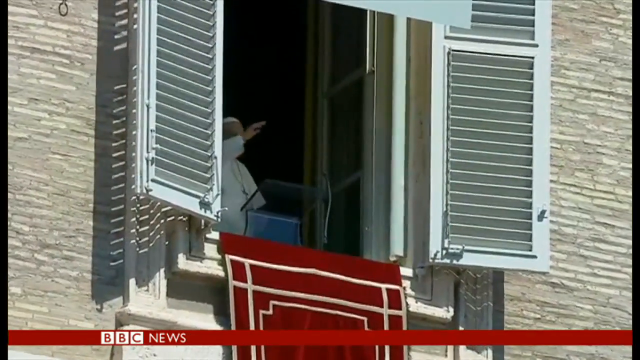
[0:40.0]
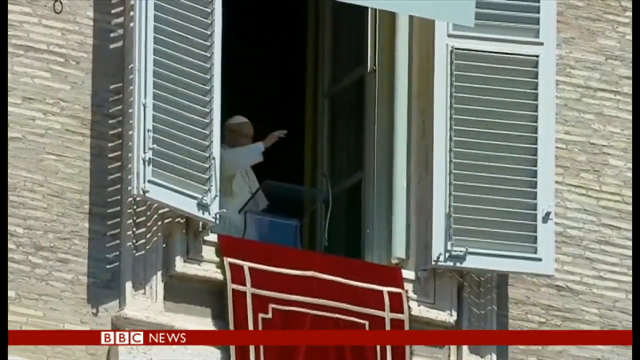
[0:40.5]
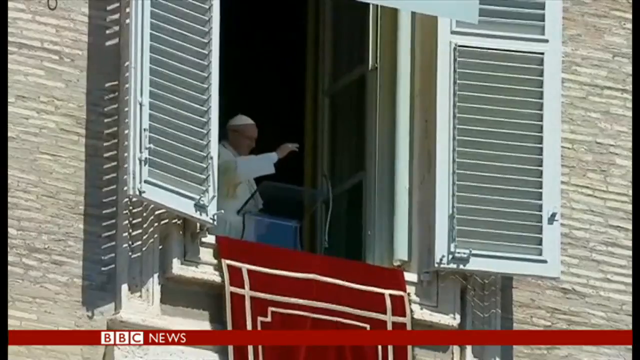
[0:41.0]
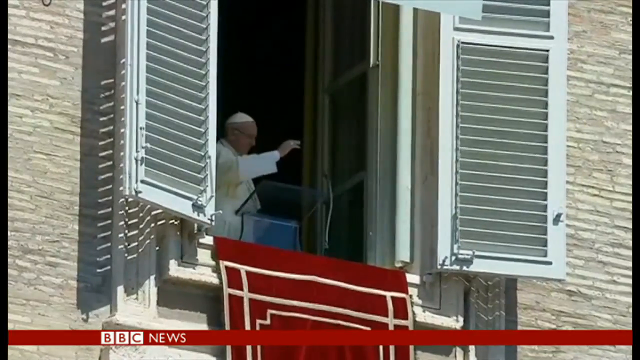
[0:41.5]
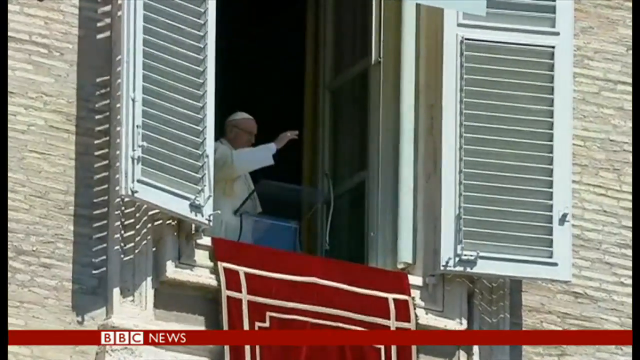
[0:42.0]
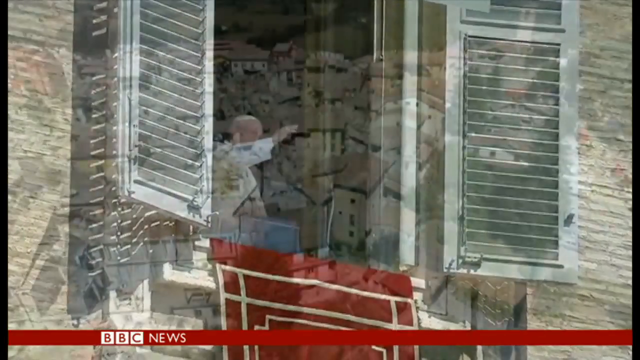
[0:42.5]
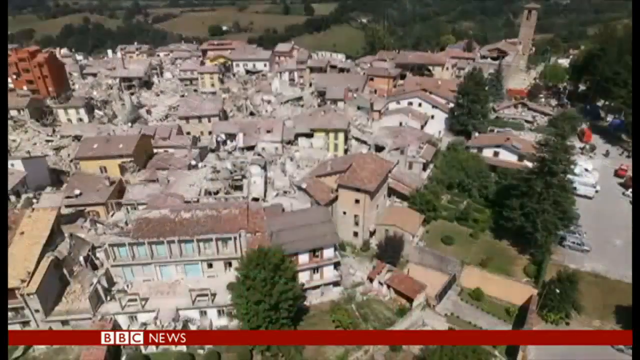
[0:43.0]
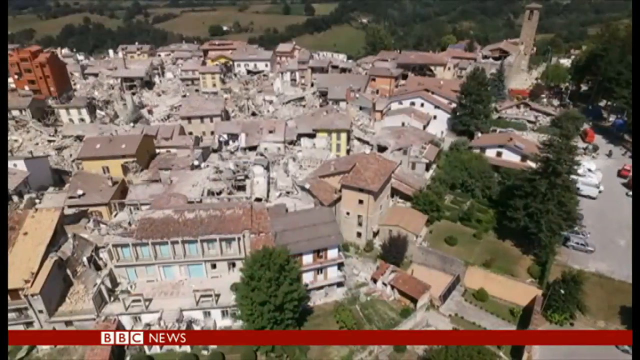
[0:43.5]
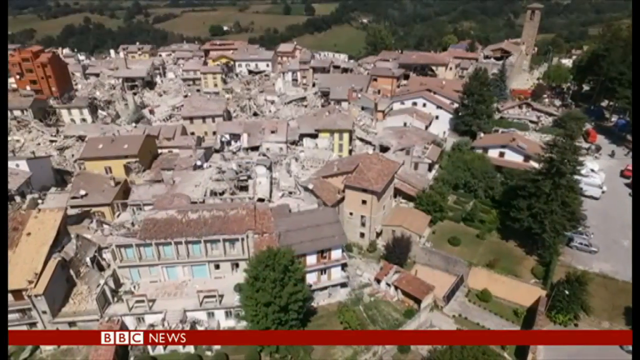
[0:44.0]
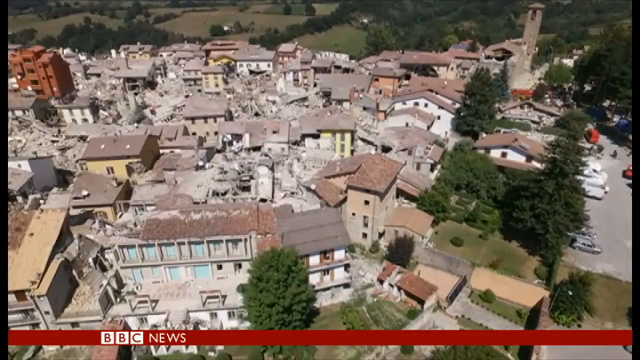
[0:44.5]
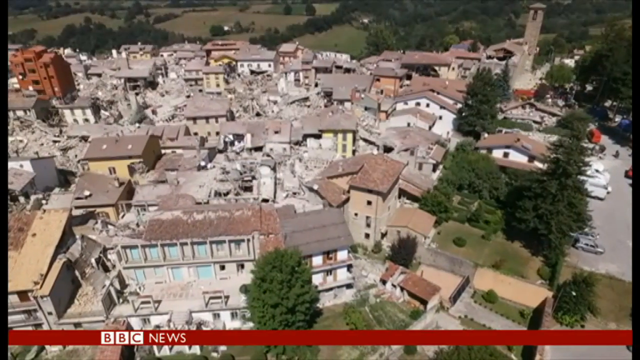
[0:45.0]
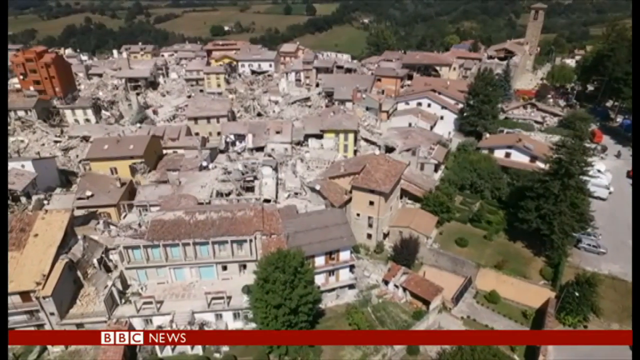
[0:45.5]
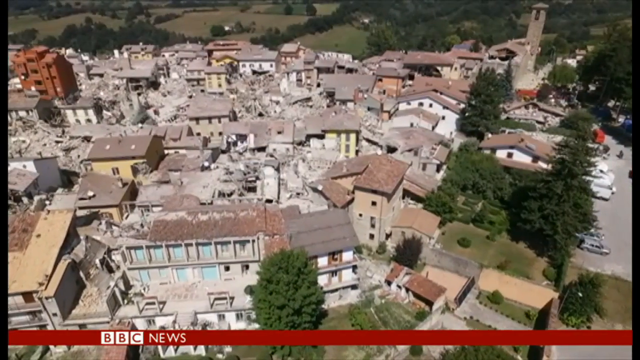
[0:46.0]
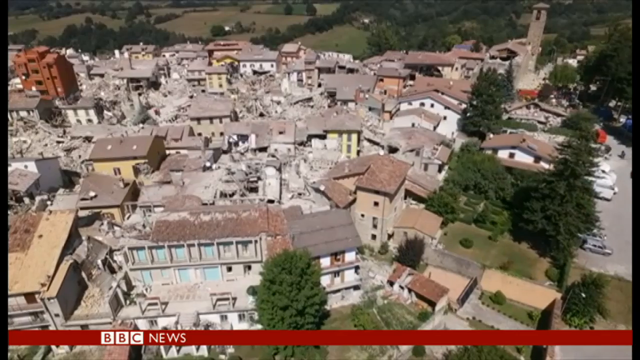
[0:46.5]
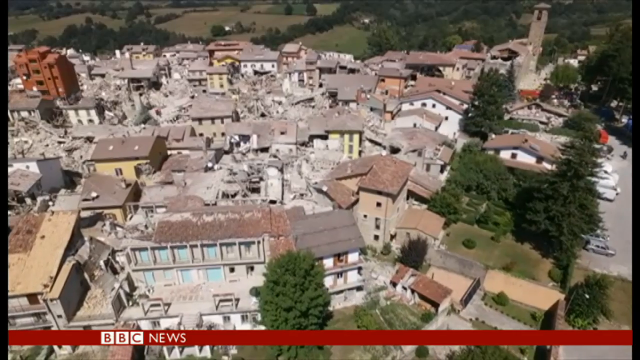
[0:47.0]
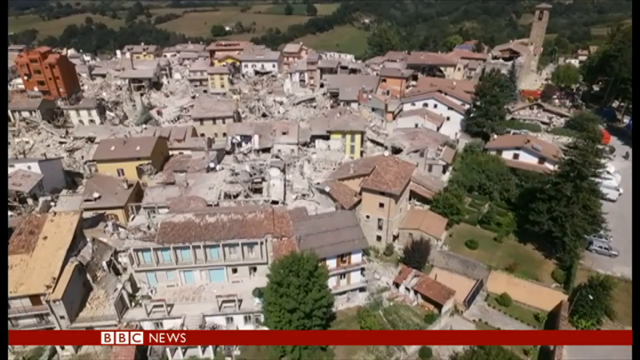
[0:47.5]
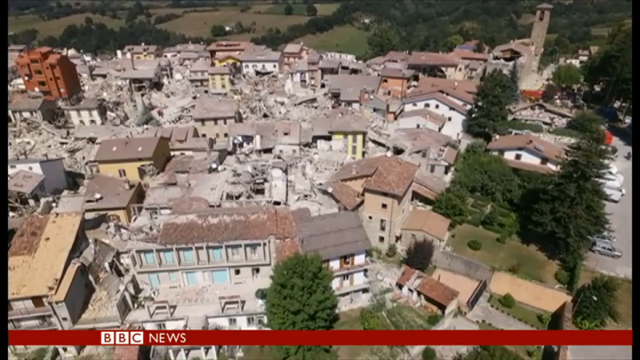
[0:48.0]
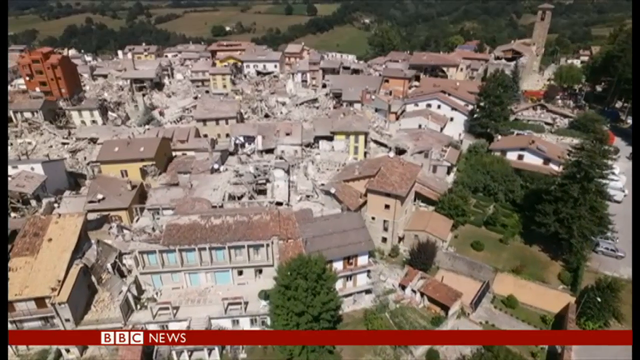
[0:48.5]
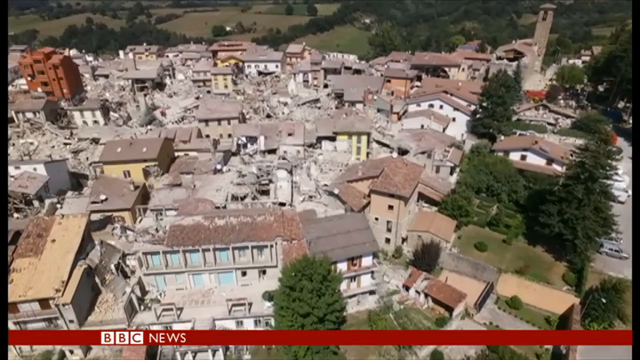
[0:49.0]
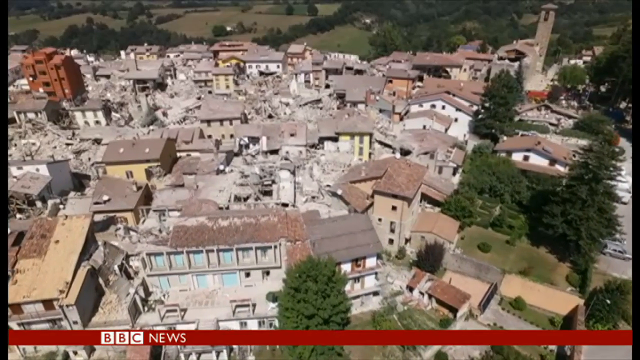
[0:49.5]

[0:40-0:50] An older man who looks like the Pope, wearing a white cap, has his right hand up as he walks toward a window whose shutters are pulled to the left and right. He turns, with his arms bent out in front of him, and appears about ready to speak. On the edge of the window is some kind of clear thing like a podium, with a mic to the right that curves up. A red banner comes down from the windowsill with geometric shapes, a long border, and another smaller box at the right side. Then an aerial shot shows Dacca with some of the devastation. There are buildings of various sizes, some smaller and some taller; the one closest is a two-story building with what may be light blue garage doors. Centered in the middle is a tan house with a brown roof. Piles of trash or debris are visible, and a few trees dot the area, right in front of the building with the blue doors.